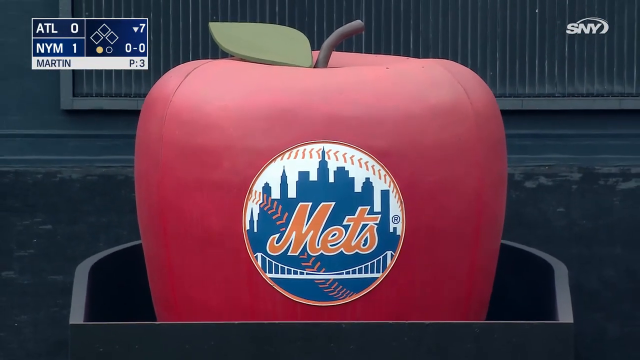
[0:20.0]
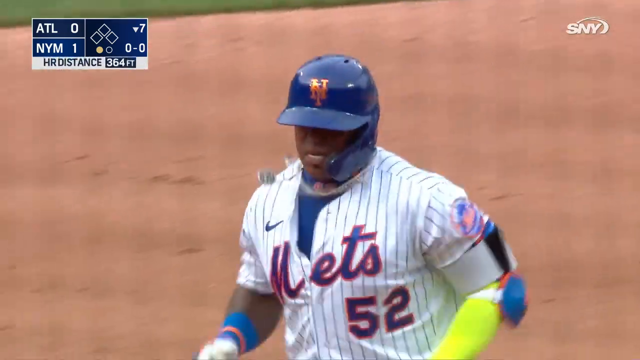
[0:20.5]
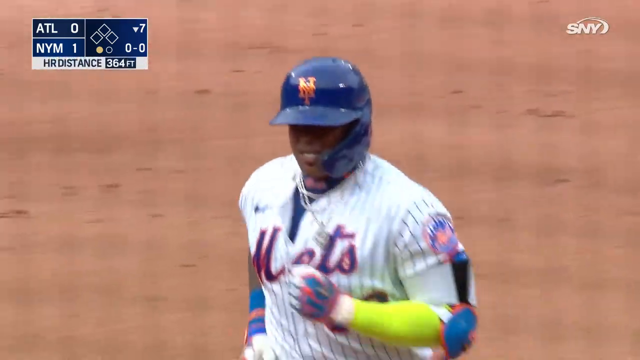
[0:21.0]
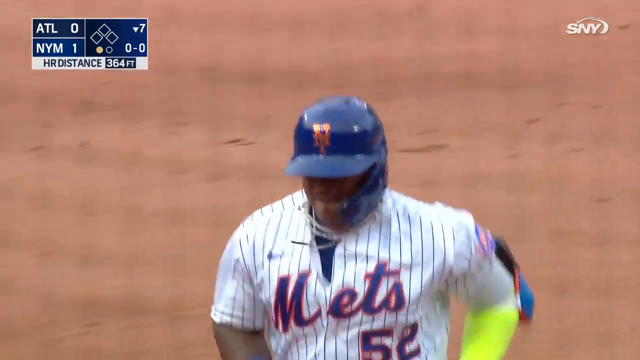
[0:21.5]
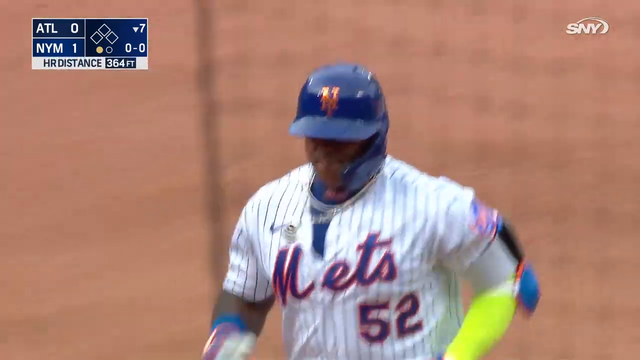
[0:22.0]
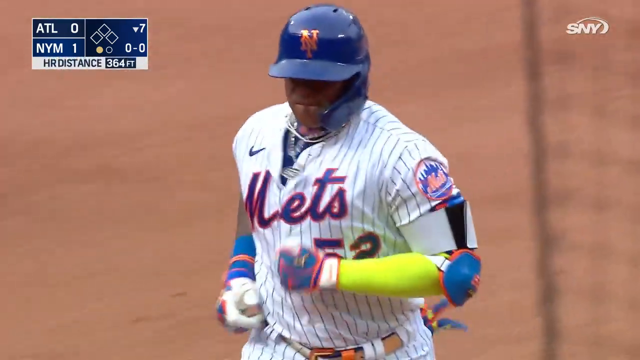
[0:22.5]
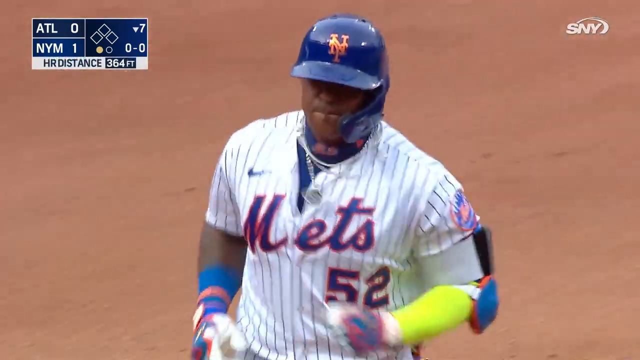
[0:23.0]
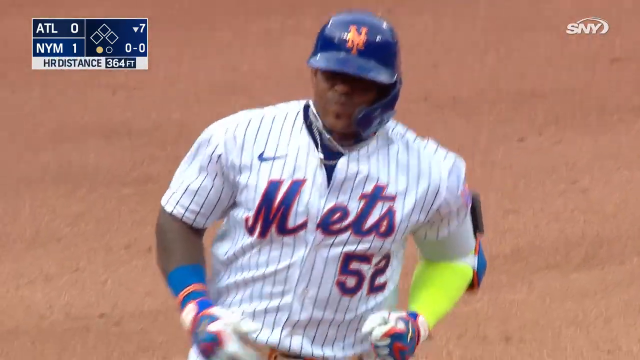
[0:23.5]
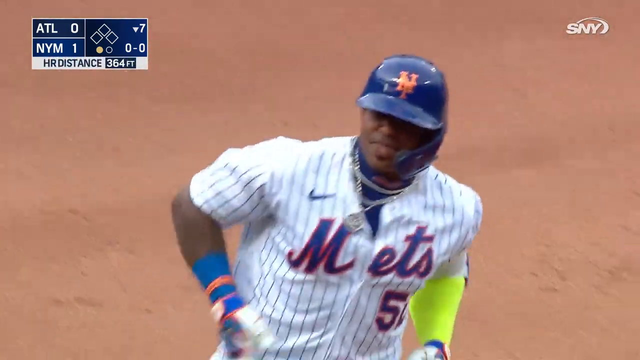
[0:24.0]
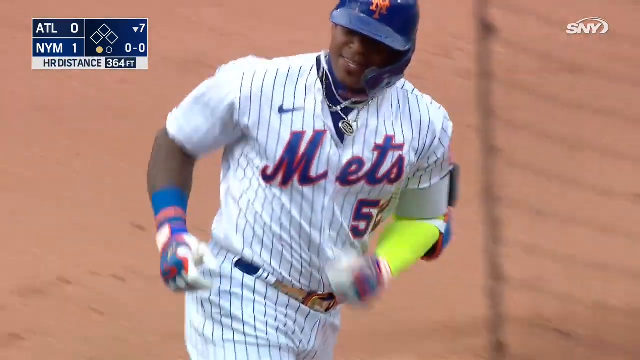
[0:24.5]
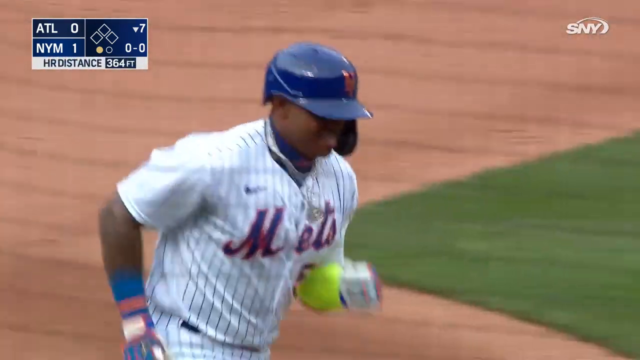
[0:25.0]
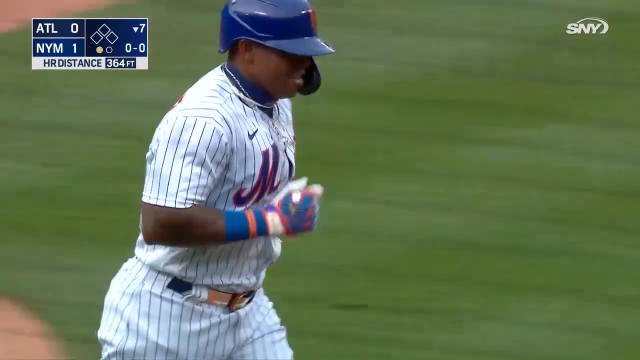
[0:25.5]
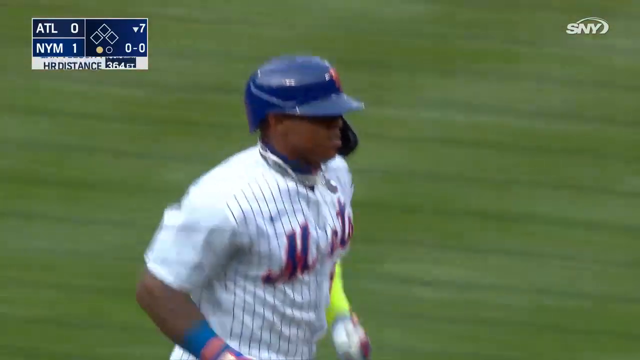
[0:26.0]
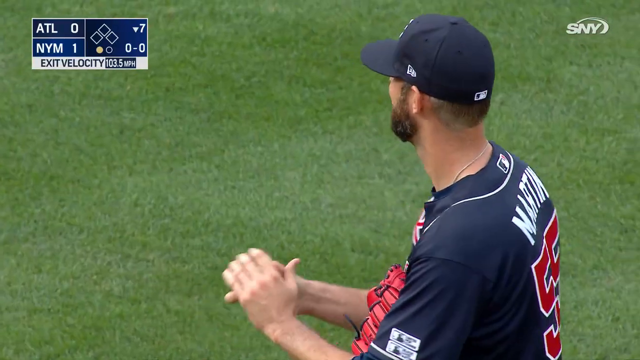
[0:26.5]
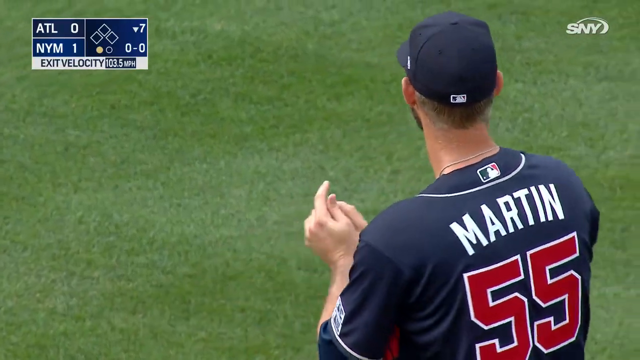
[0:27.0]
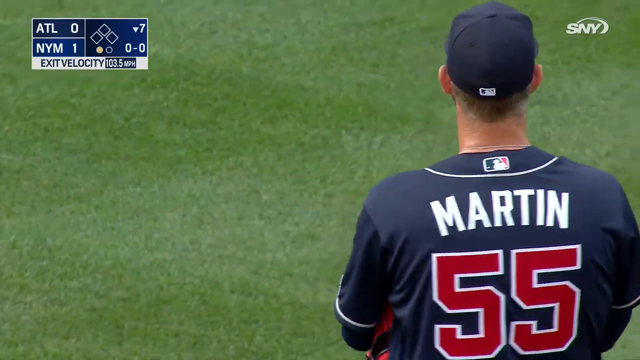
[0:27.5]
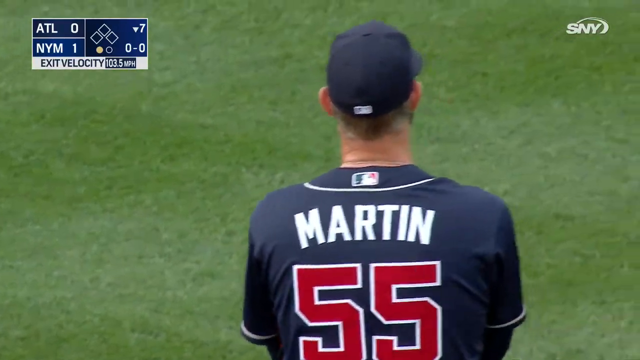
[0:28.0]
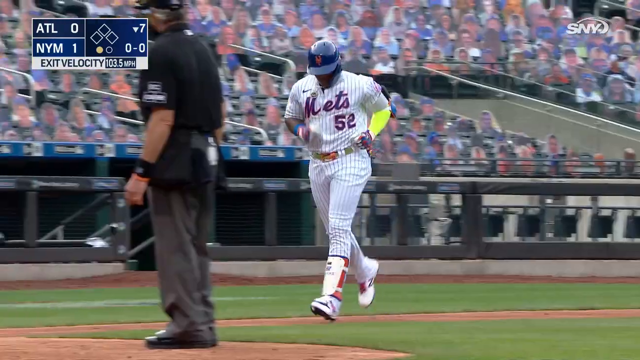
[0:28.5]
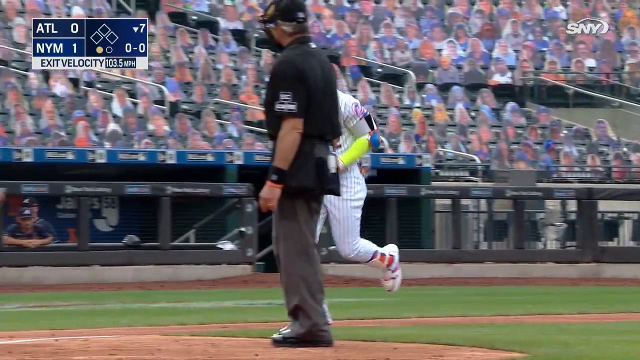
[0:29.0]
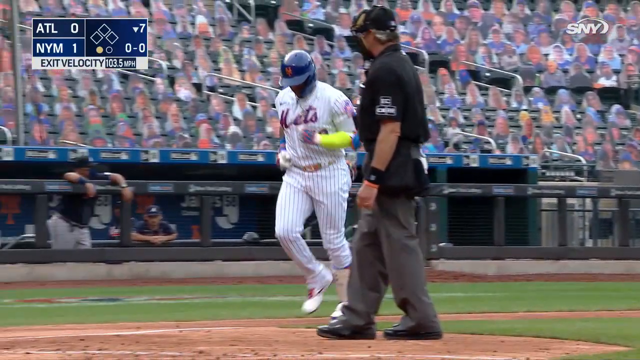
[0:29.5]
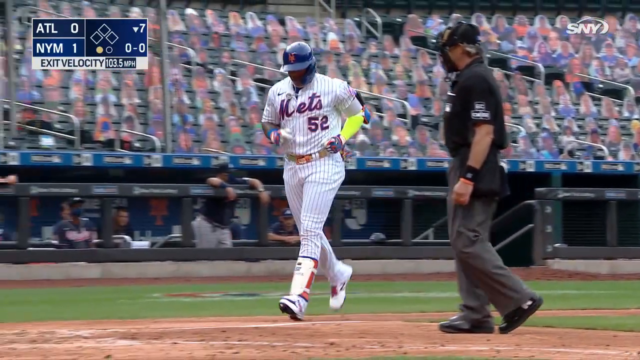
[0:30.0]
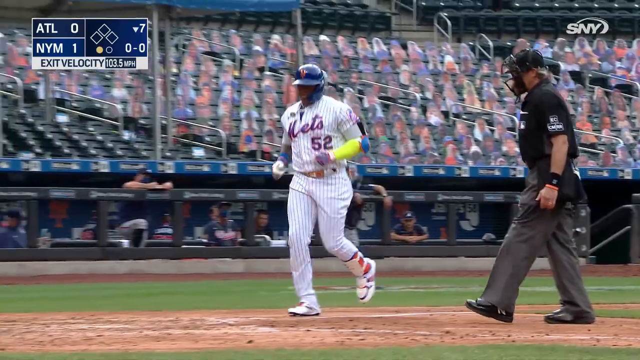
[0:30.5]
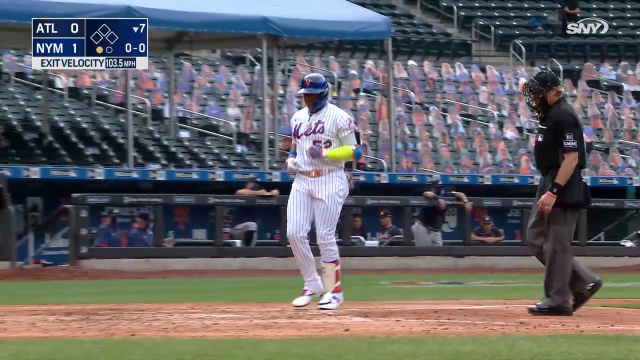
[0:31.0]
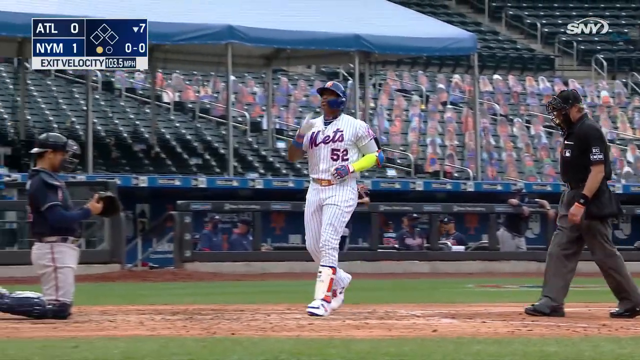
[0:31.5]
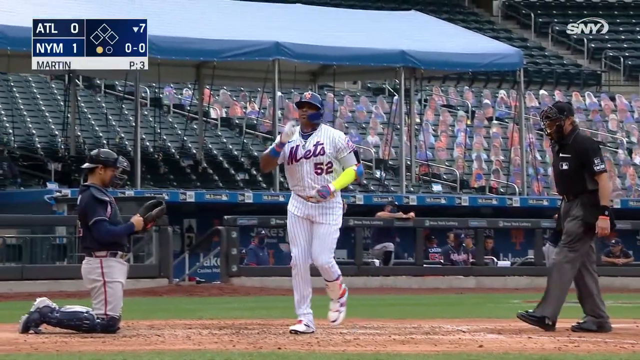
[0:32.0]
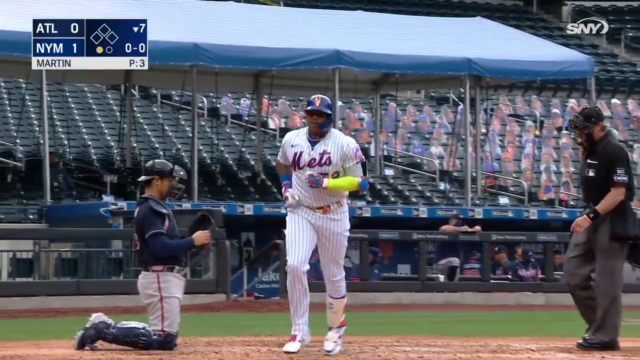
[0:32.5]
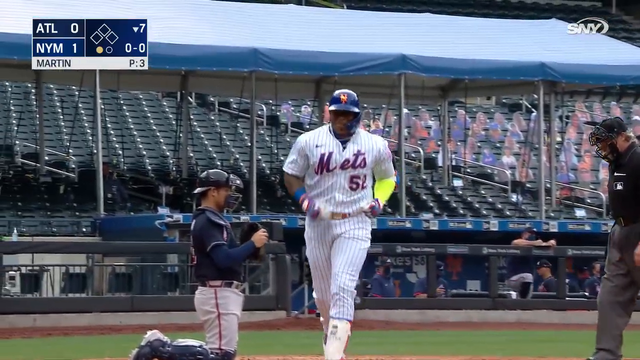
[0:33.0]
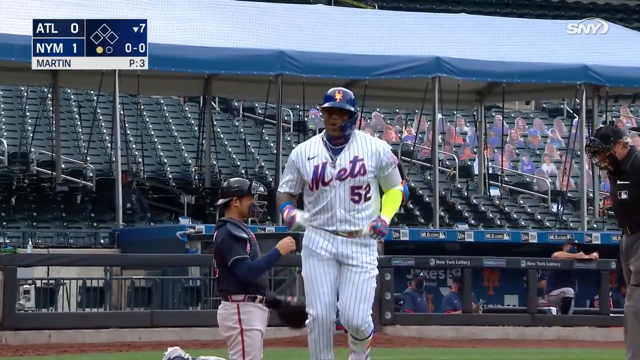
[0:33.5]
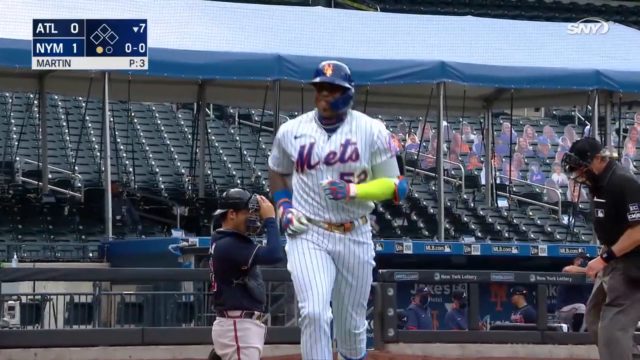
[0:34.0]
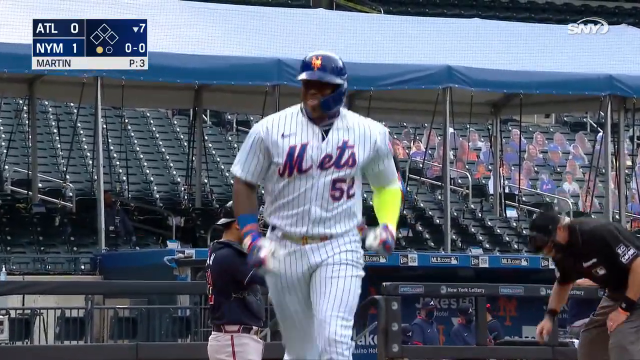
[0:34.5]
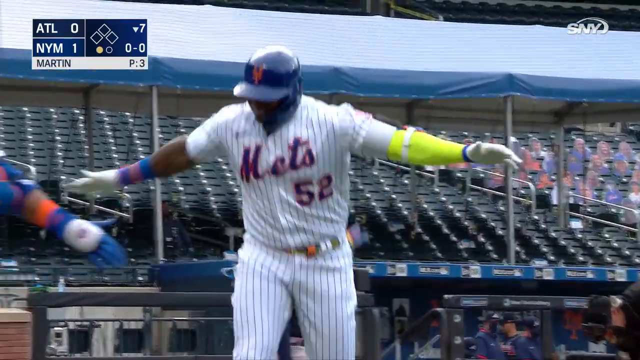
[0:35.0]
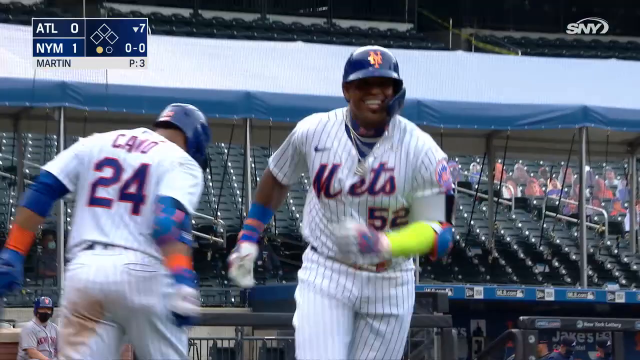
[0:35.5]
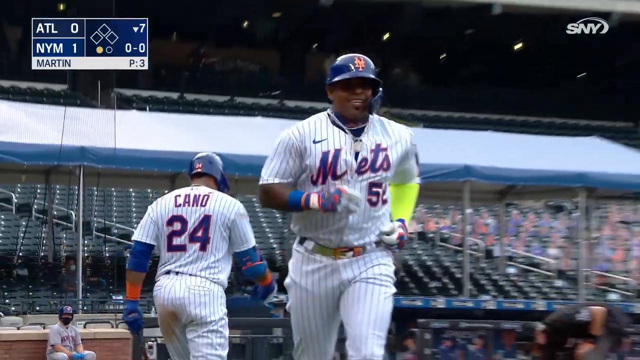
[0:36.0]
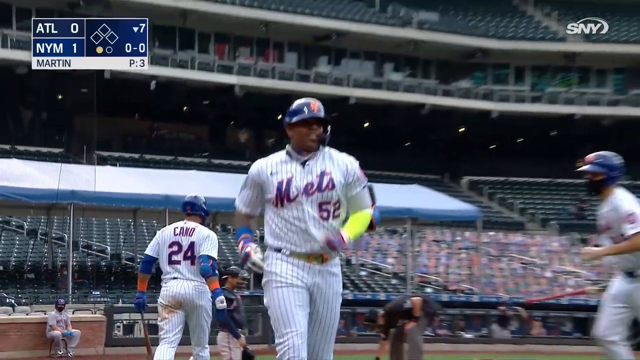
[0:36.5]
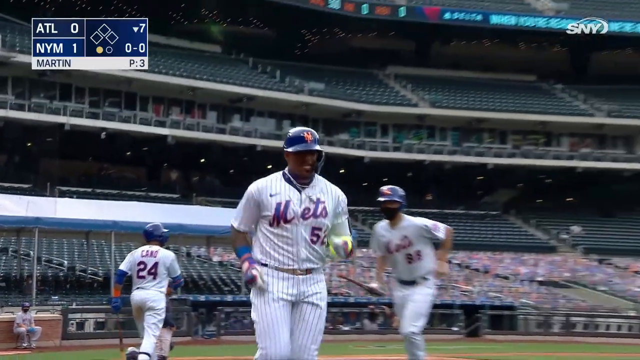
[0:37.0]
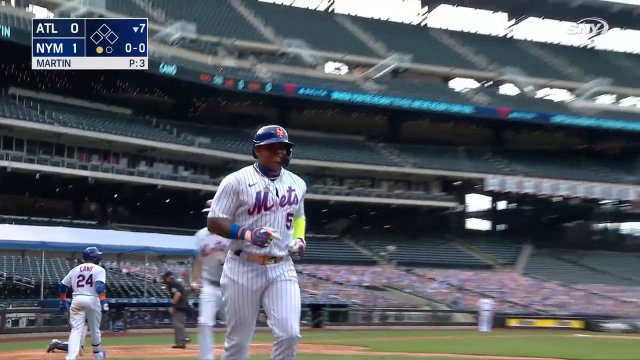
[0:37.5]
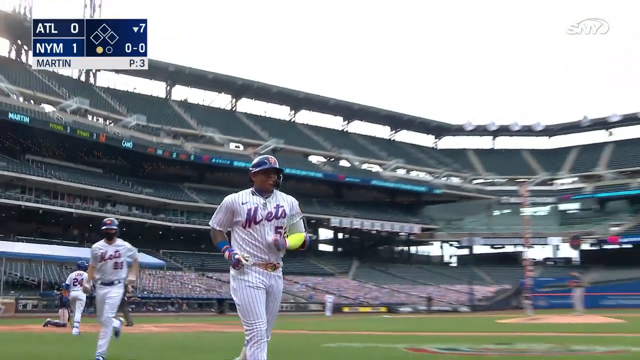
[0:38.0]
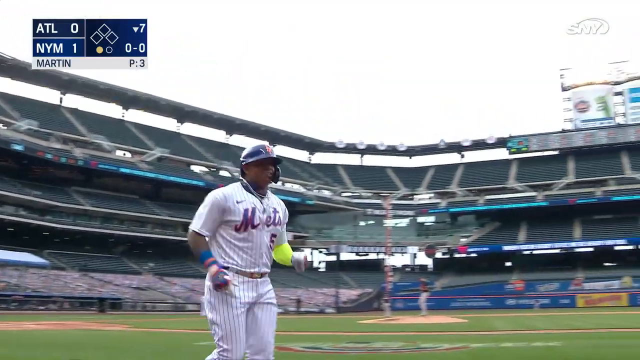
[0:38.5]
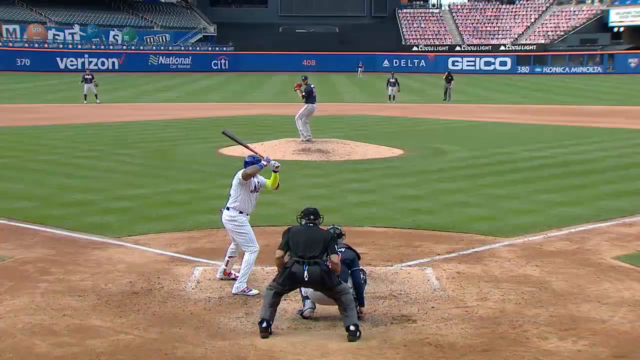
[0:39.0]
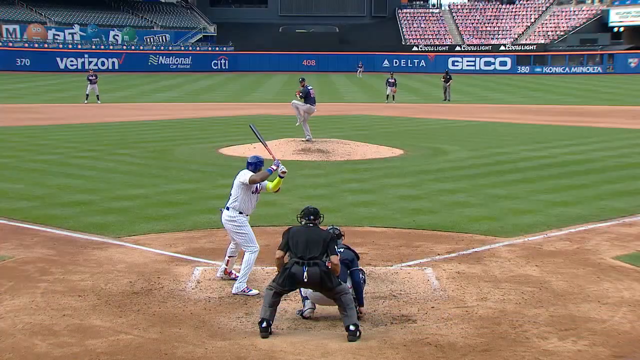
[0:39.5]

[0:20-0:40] Another close-up shows Cespedes still running the bases. The graphic now reads "home run distance 364 feet," and the SNY logo is in the top right. Cespedes wears bright lime green on his forearm and a Mets-colored elbow guard, and his silver chain jiggles back and forth as he bounces around the bases. The camera cuts to a close-up of the pitcher rubbing up a new ball while Cespedes keeps running. The umpire waits at home plate and checks that Cespedes does step on the plate. Cespedes puts his finger up to his mouth in a shushing motion to celebrate. Above the stands in the background is an awning that is blue on top. Cano, number 24, on deck, gives Cespedes a high five as he passes by, and Cano starts toward the plate. The camera zooms out as Cespedes continues back to the dugout, revealing more of the stadium, with the top and middle decks completely empty.